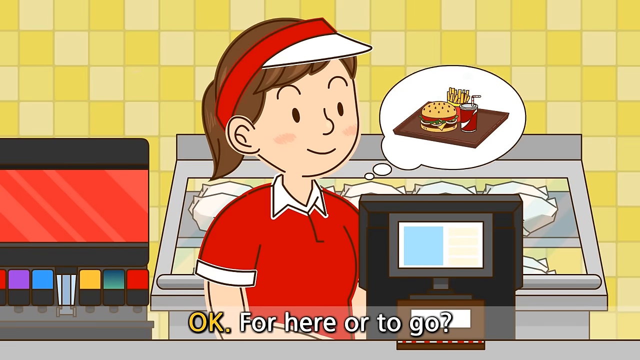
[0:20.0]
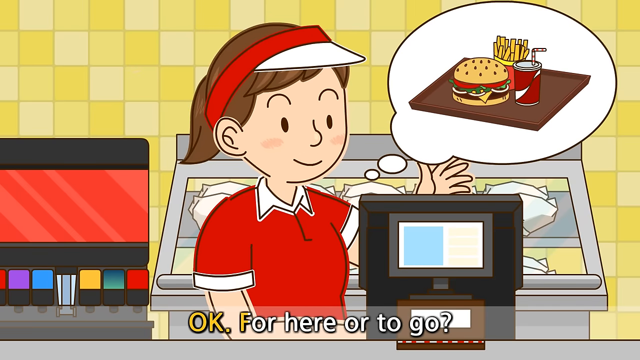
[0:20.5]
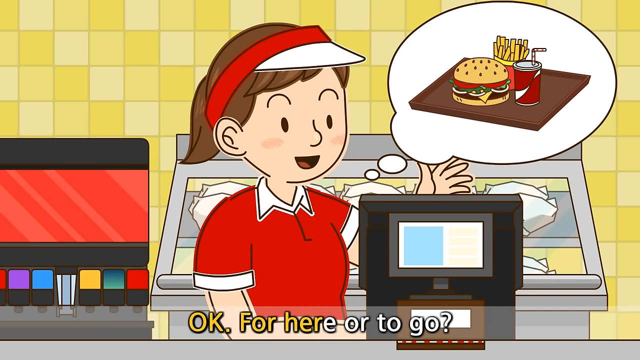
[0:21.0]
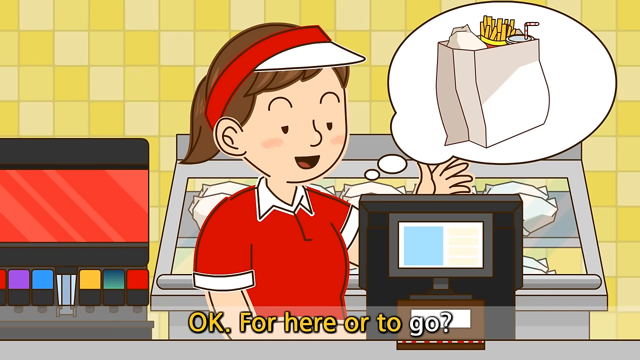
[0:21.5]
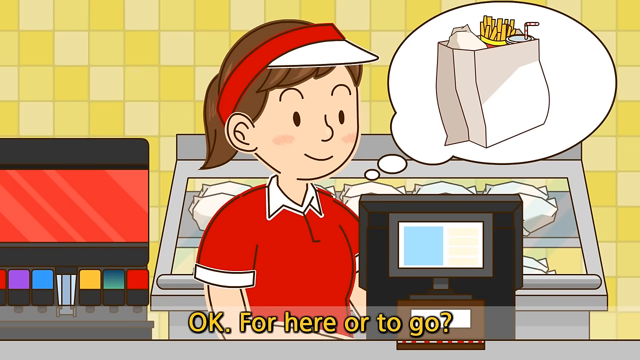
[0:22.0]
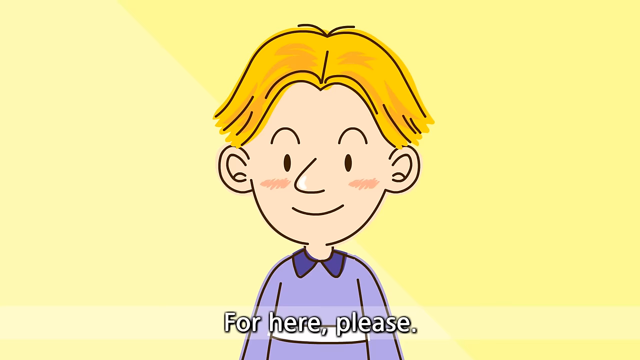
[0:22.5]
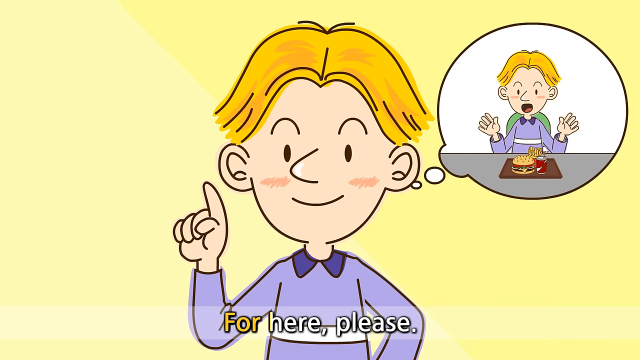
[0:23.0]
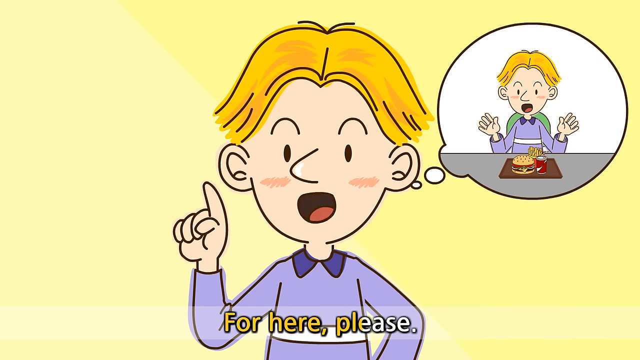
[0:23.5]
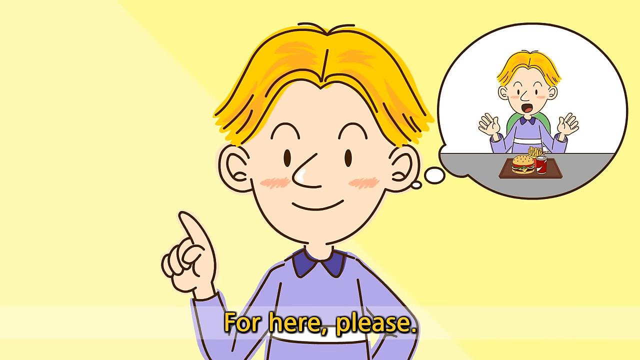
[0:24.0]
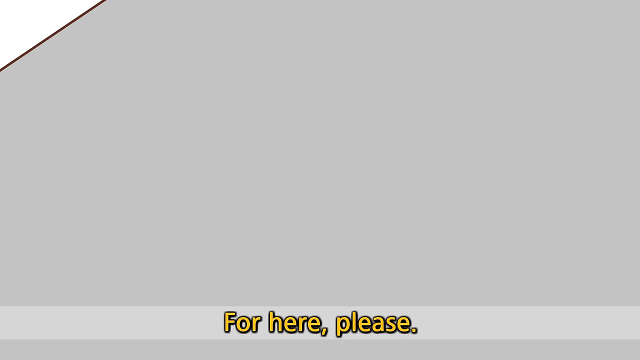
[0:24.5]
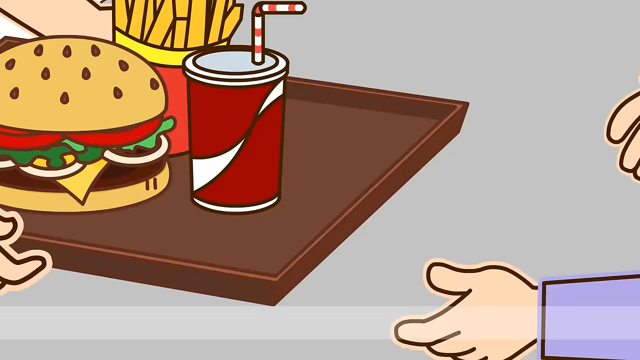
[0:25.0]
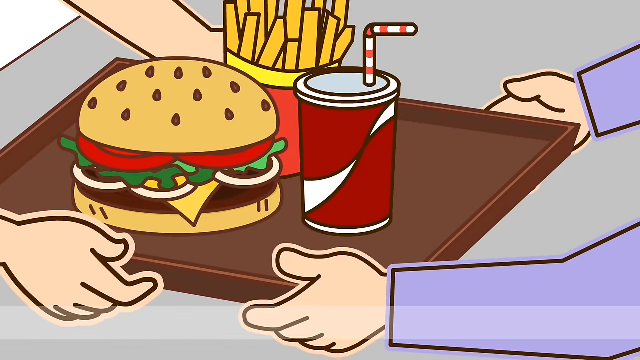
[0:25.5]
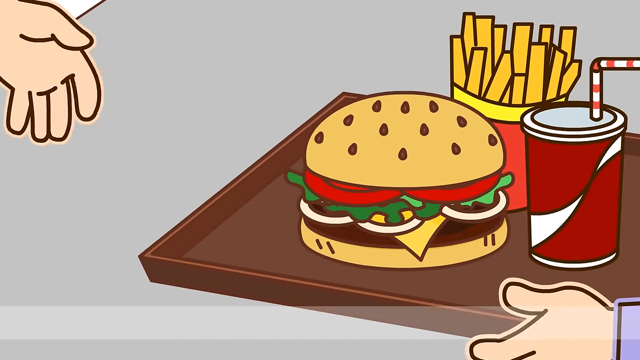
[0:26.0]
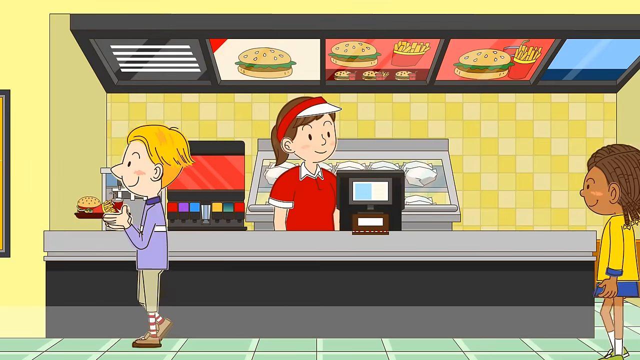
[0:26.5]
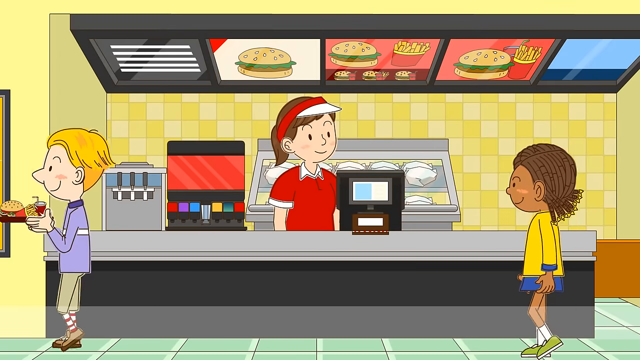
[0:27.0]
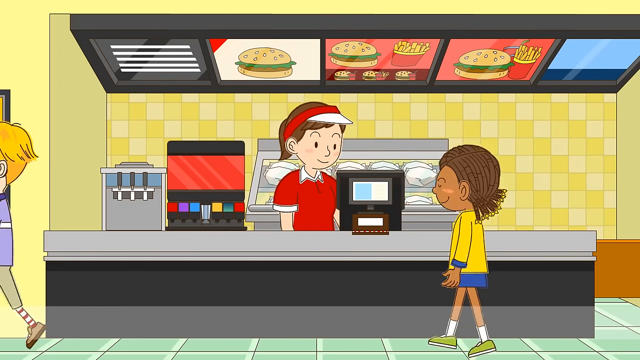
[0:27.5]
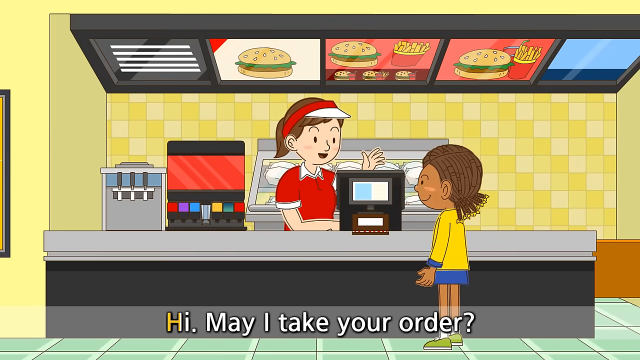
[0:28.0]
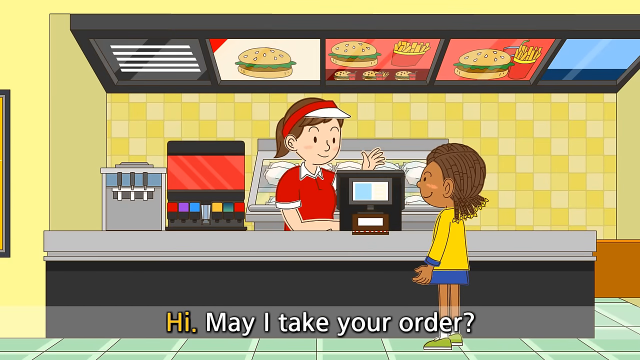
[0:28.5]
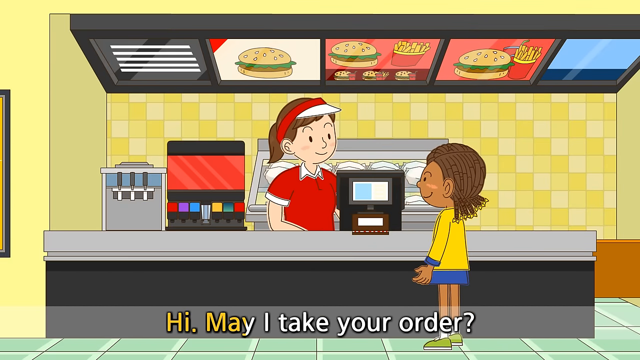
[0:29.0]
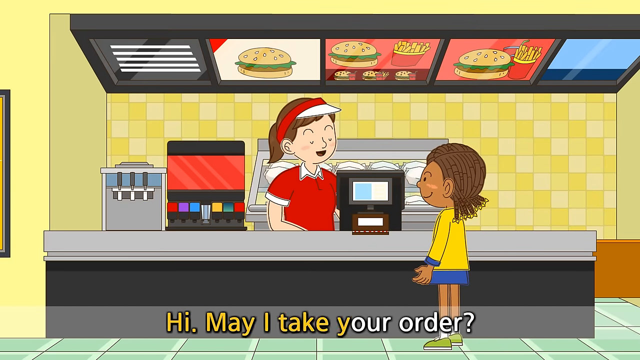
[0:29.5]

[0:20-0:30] A girl working at a counter asks different customers what they would like to order and whether it is for here or to go. A bubble picture, kind of like her thoughts in a bubble right beside her head, shows that the boy has asked for a hamburger, fries and a coke. She shows that an order to go is put in a bag and an order for here is put on a tray. The boy who ordered walks down with the tray toward a table. Behind her are some of the food and drink refill areas.